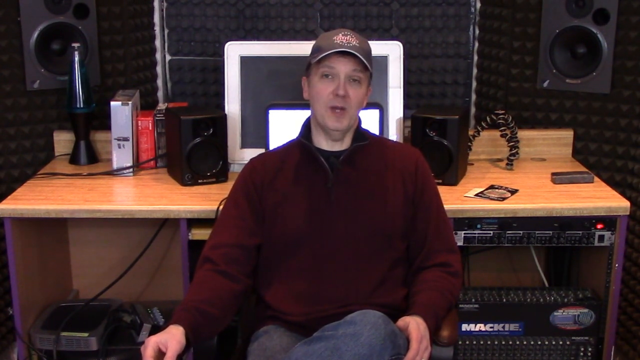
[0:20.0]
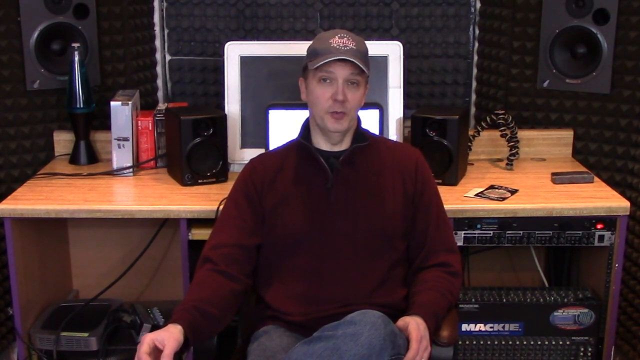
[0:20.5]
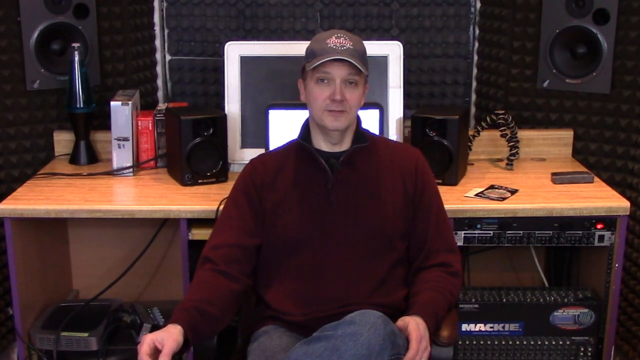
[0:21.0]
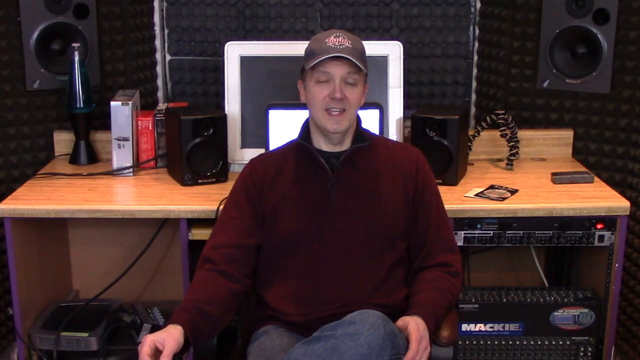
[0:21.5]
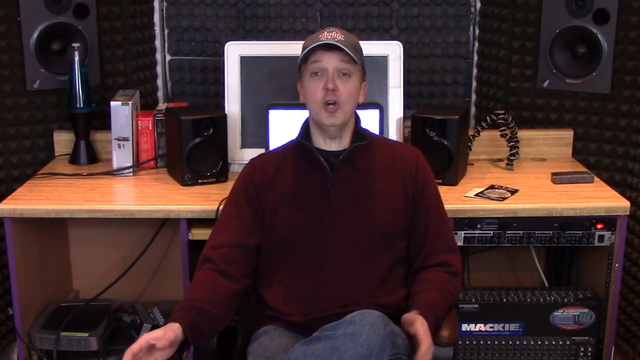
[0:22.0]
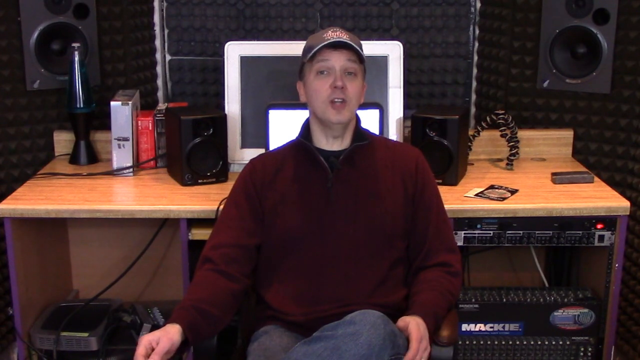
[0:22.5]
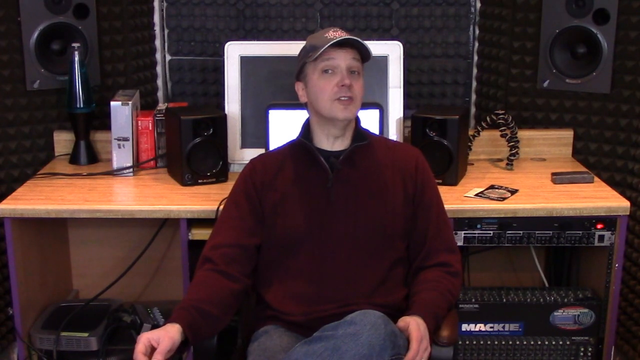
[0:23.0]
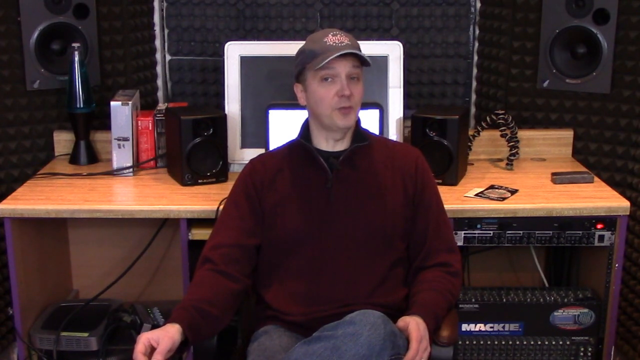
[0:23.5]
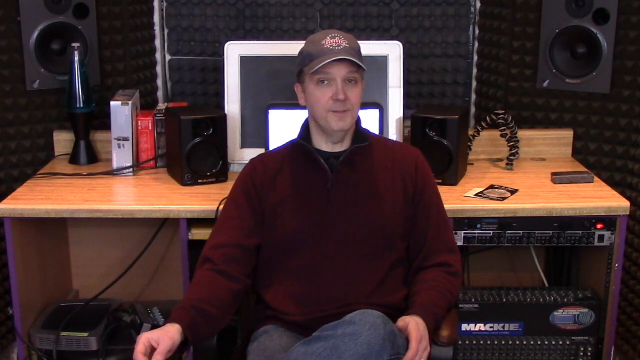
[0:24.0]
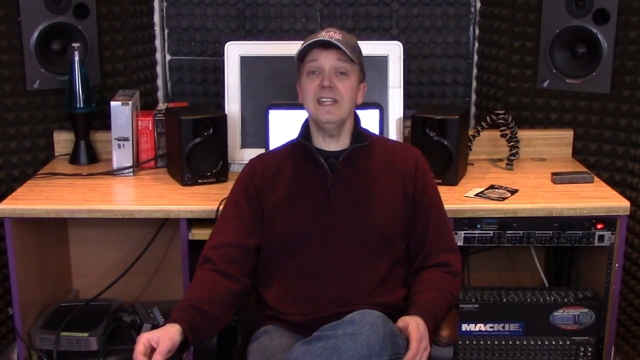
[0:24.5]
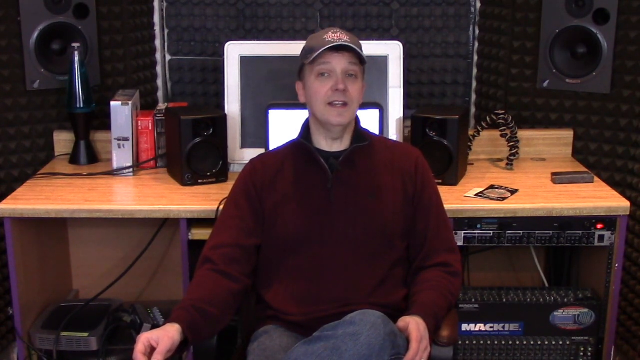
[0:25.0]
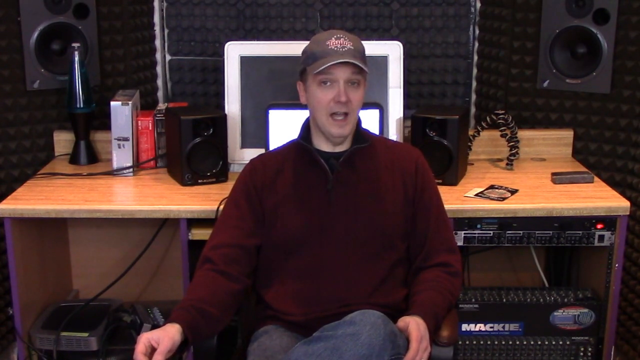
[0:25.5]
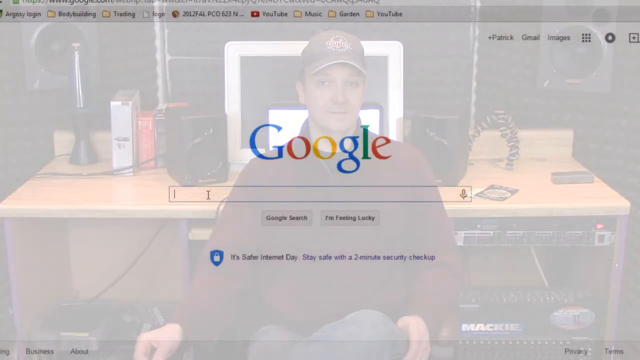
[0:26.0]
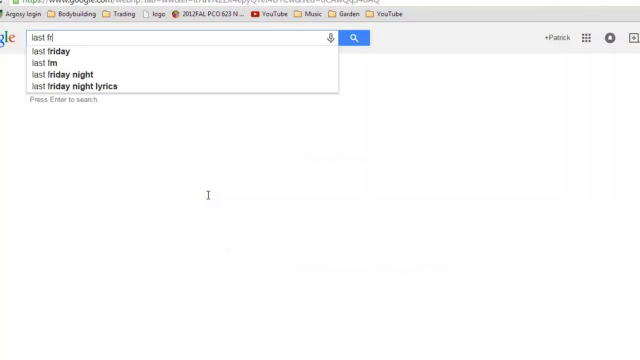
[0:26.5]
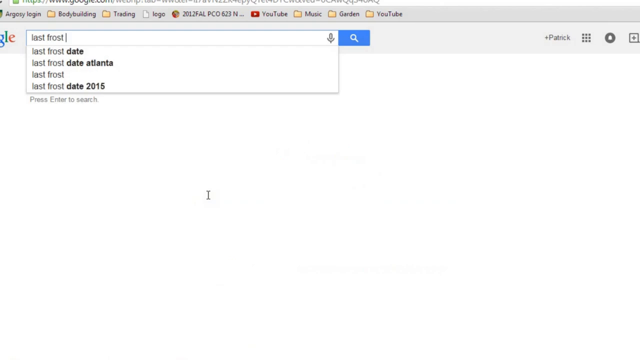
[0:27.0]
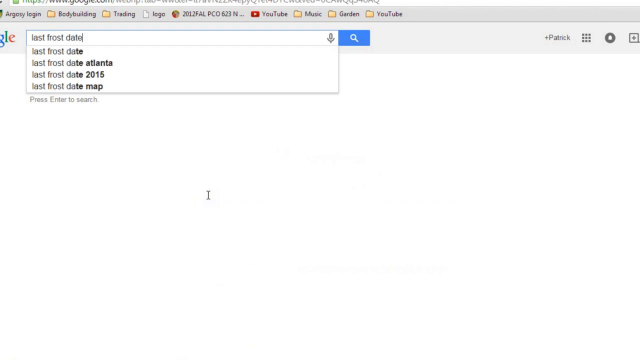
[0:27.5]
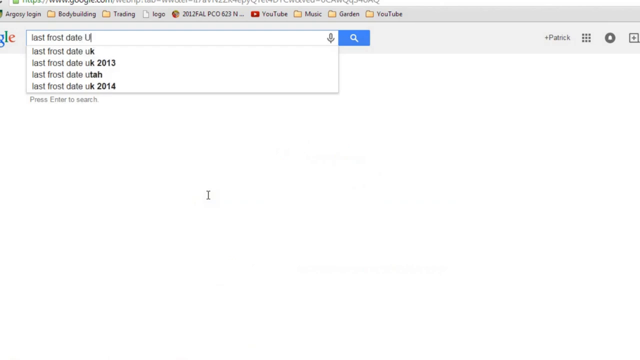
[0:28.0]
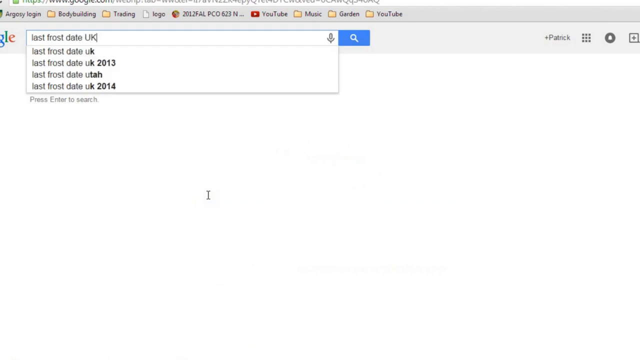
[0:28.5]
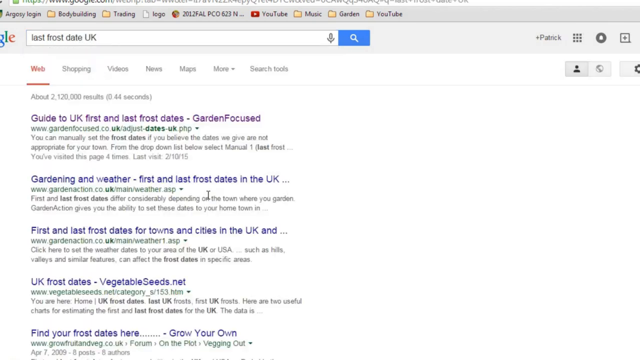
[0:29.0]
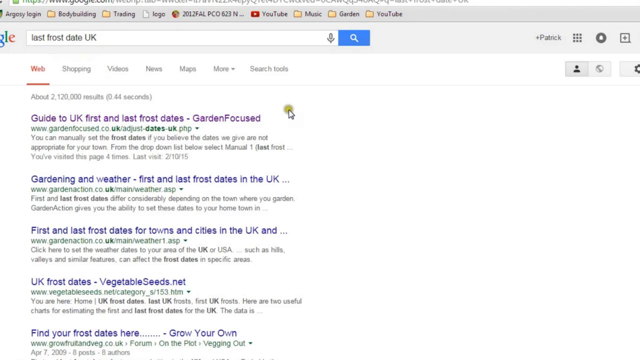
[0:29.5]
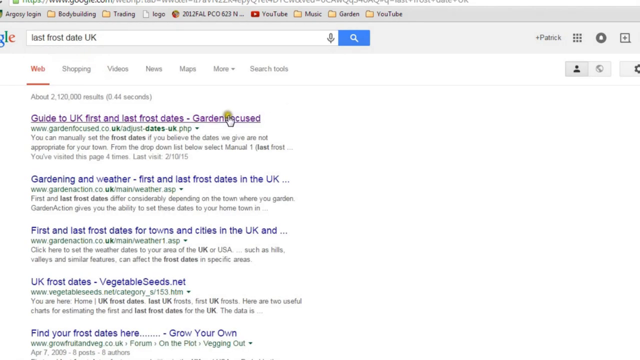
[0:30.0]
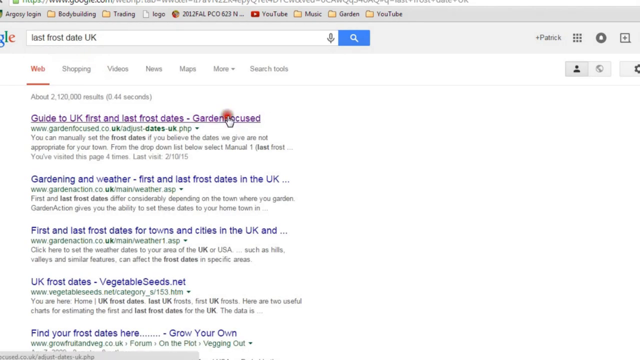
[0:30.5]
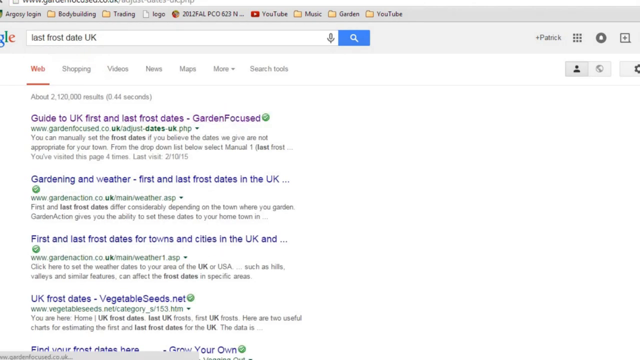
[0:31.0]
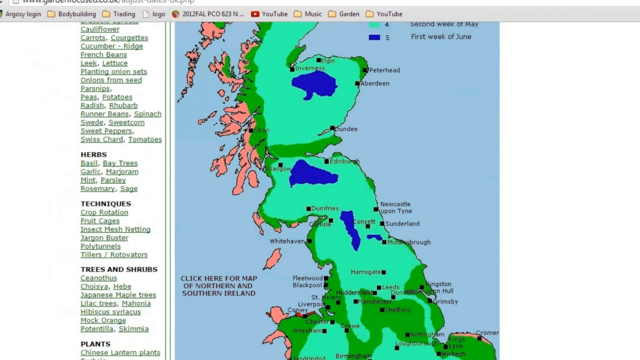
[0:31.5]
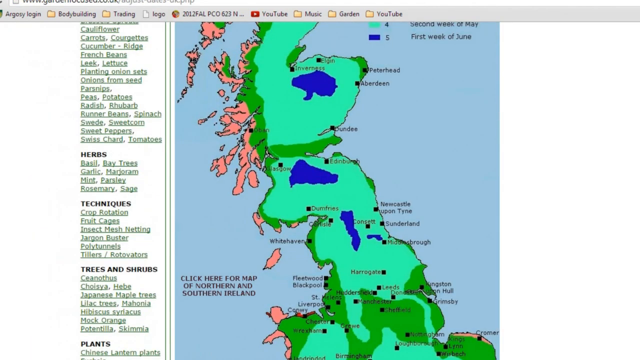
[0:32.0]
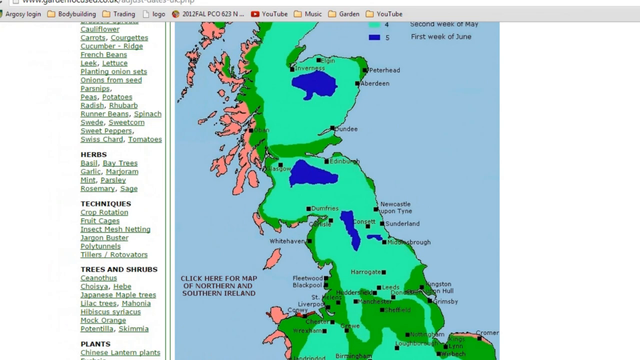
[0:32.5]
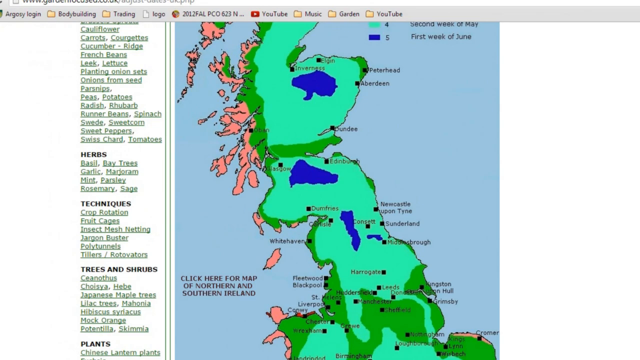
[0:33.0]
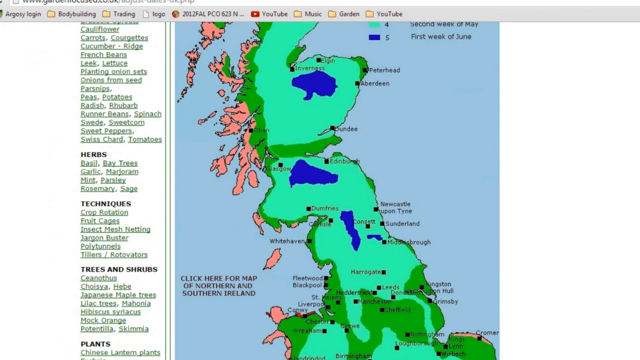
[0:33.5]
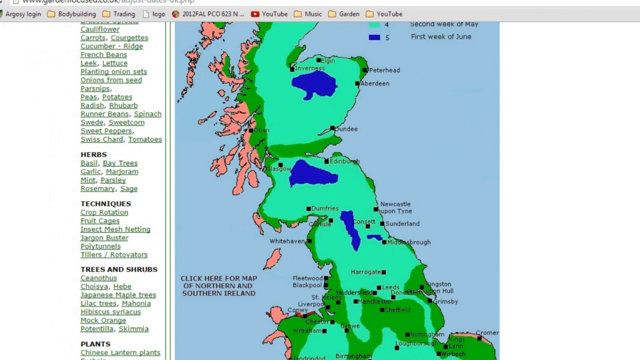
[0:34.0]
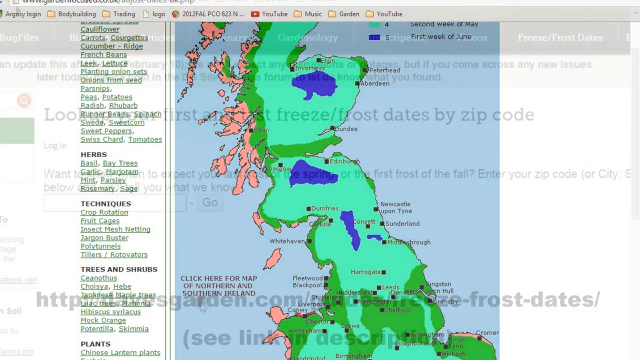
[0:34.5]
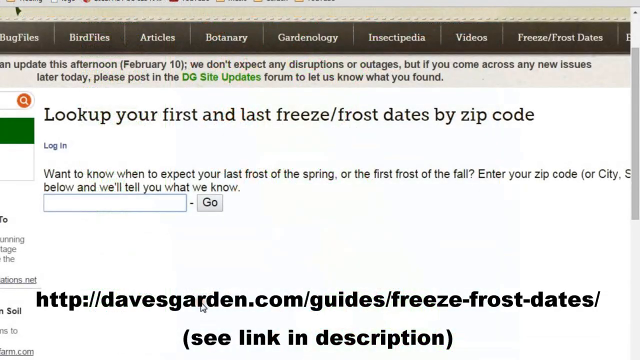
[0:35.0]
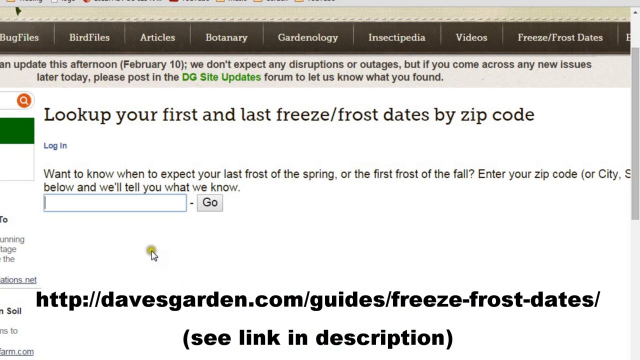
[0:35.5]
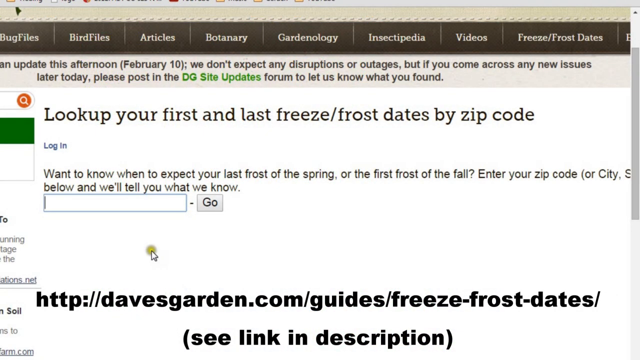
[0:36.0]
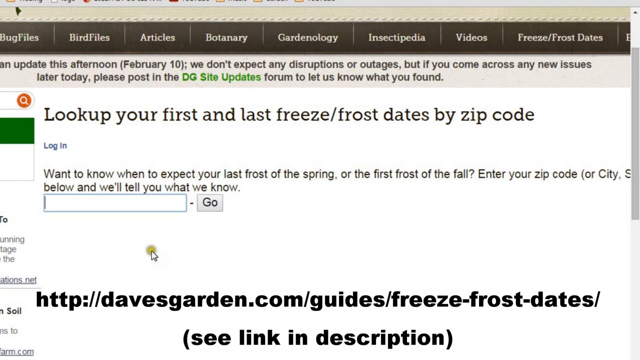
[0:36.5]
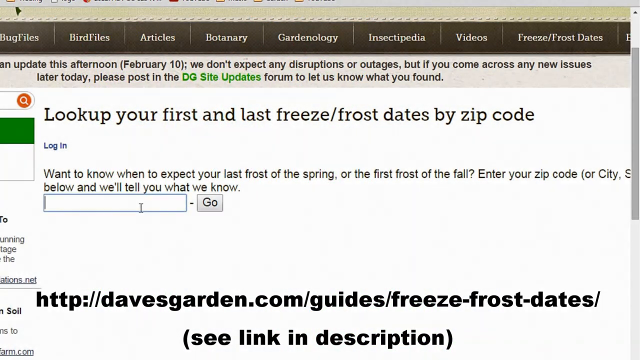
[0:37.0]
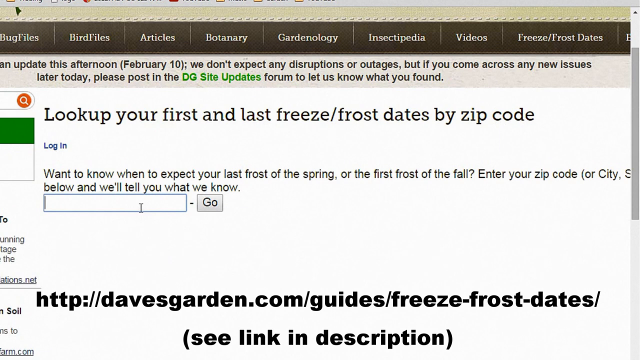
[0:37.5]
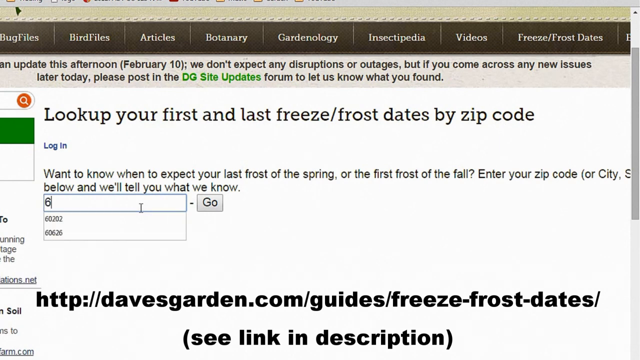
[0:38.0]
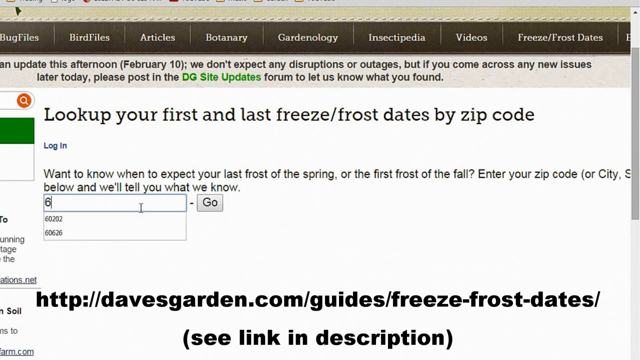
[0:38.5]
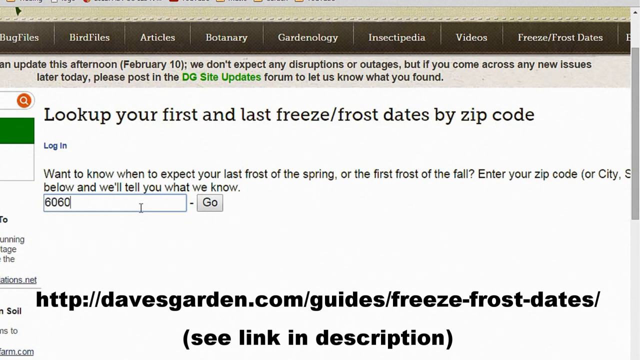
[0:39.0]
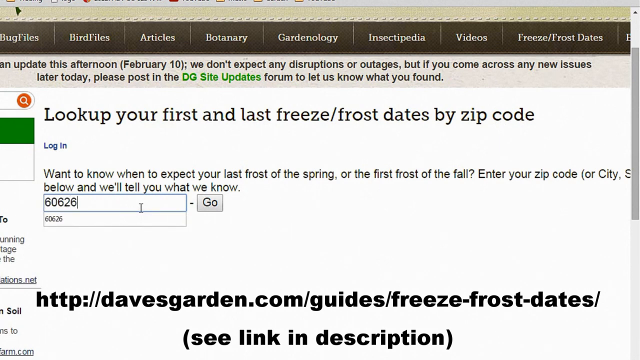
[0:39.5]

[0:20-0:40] Patrick Dolan continues presenting from his home studio, facing the camera. The video then shows a computer screen in use. On Google, someone searches for the last frost date in the UK. The first result, of about 2.1 million, is a garden-focused website about UK first and last frost dates, with a table that can be adjusted for a particular region of the UK. The user opens that web page for the detail, and a map of the UK is shown from Birmingham northwards, not including southern England but reaching at least as far as Caithness in Scotland. Frosts occur in the first week of June in the Cairngorm Mountains of Scotland, in the upland area south-east of Glasgow and south-west of Edinburgh, possibly the Pentland Hills, and in parts of the North Pennines between Durham and Cumberland. Mid-May frosts cover all of Scotland apart from the west coast and central belt, most of northern England including nearly all of Yorkshire apart from the coastal strip, and reach down into the East Midlands and Mid-Wales. The video then shows how to look up the last frost date by zip code or postcode, with a search for 60626, which looks like an American zip code.